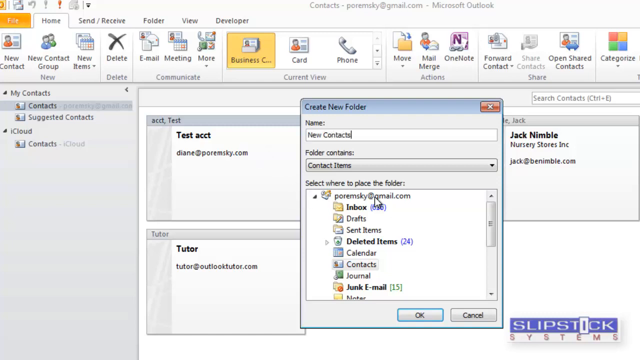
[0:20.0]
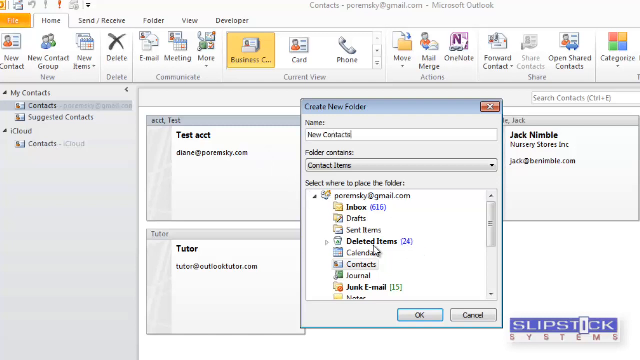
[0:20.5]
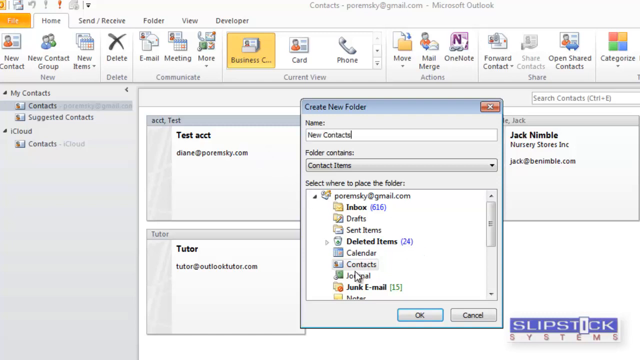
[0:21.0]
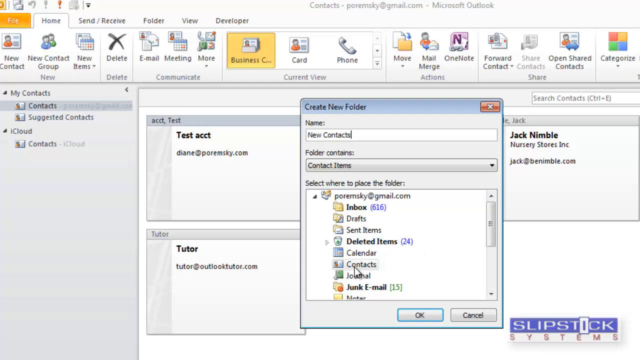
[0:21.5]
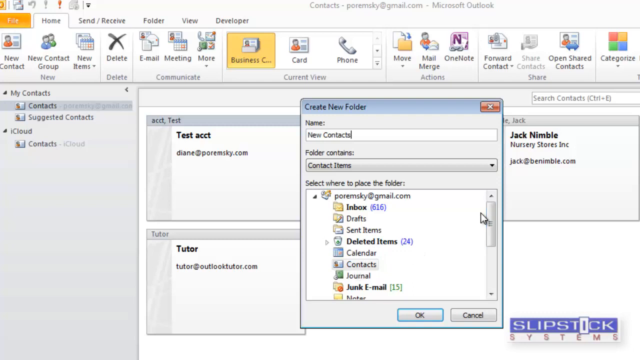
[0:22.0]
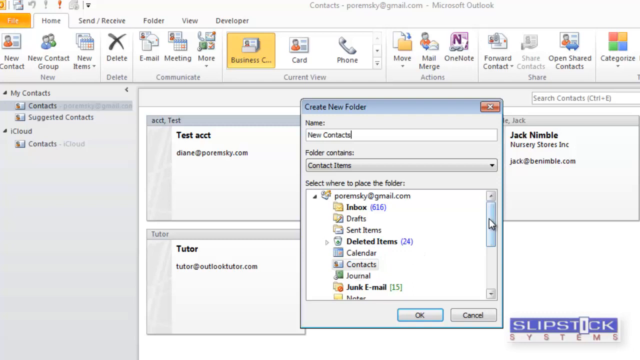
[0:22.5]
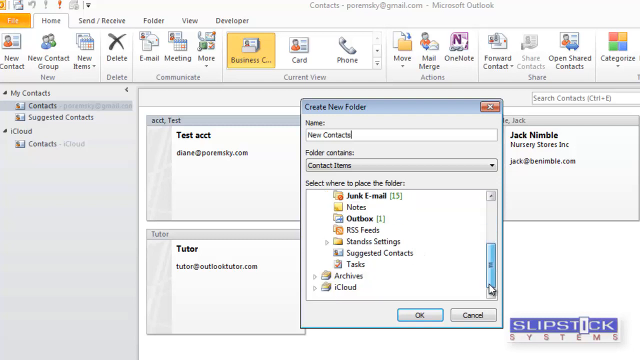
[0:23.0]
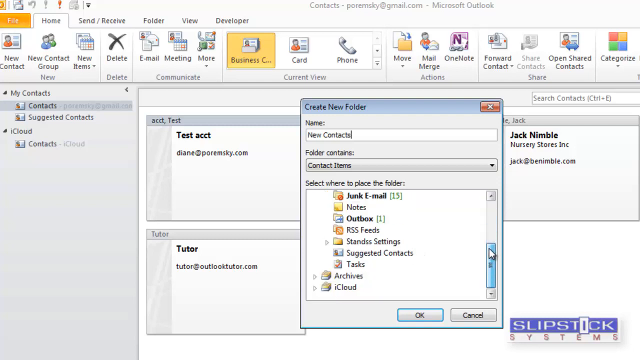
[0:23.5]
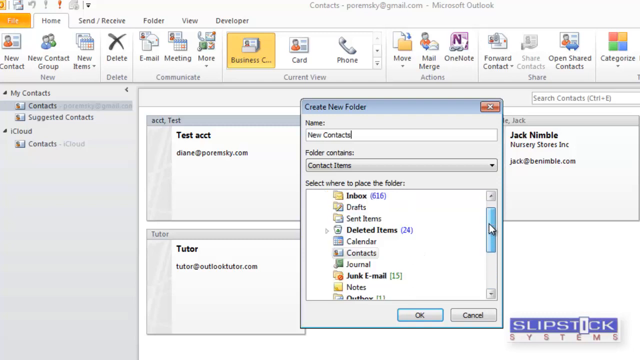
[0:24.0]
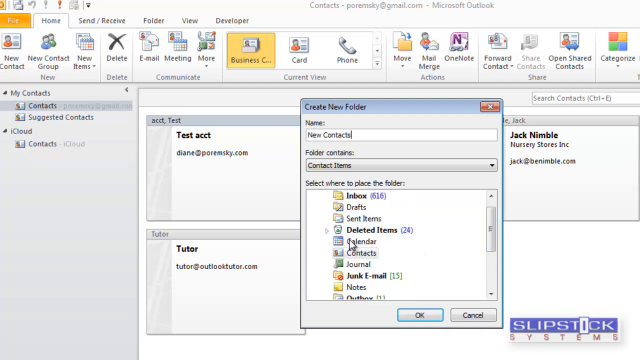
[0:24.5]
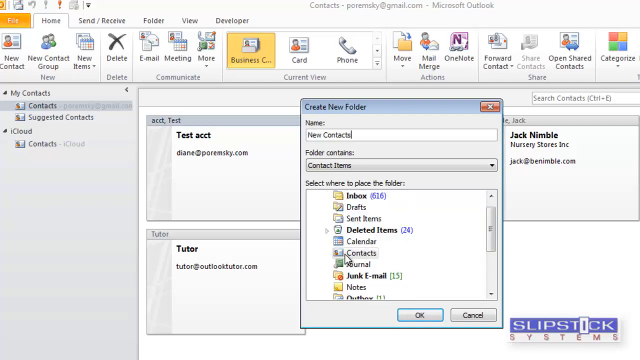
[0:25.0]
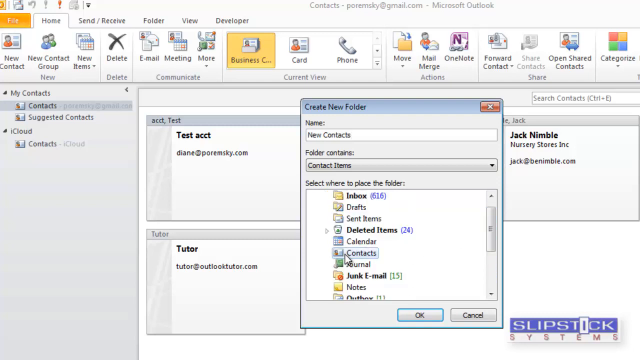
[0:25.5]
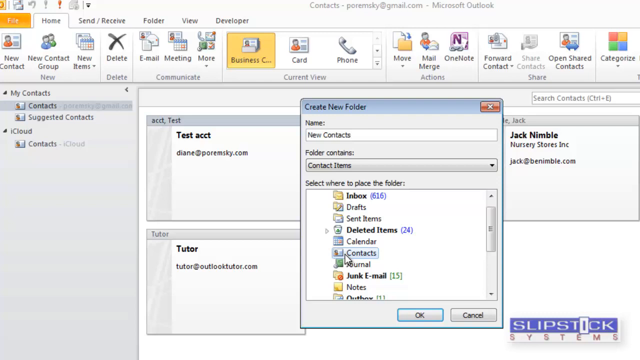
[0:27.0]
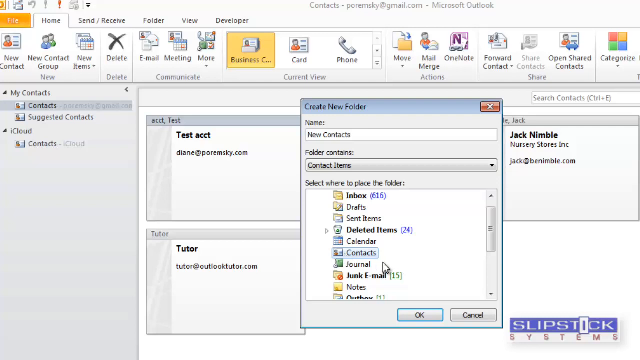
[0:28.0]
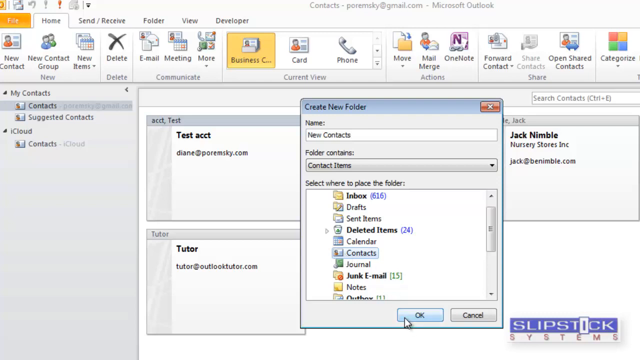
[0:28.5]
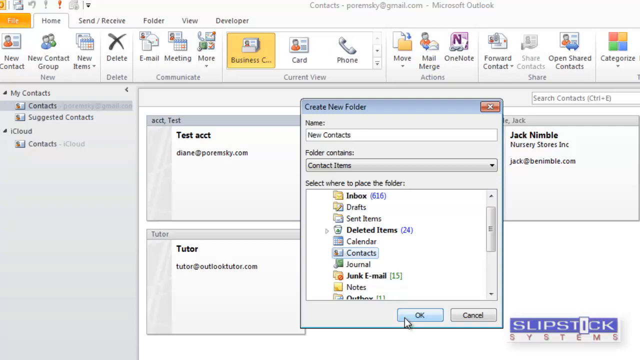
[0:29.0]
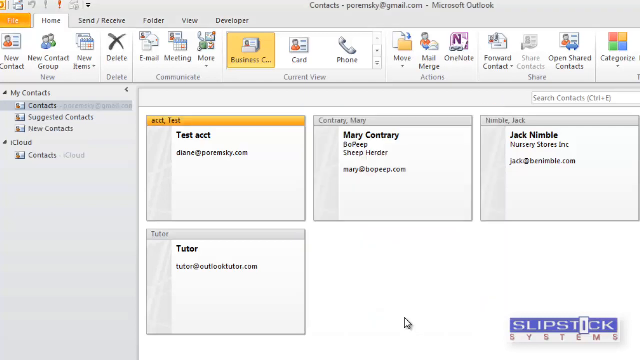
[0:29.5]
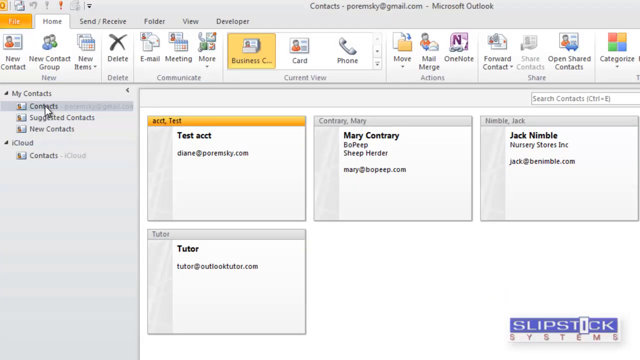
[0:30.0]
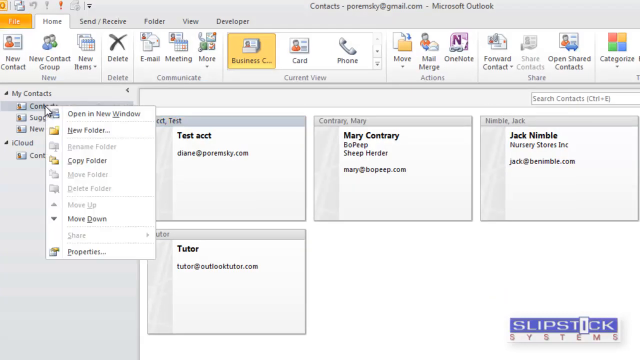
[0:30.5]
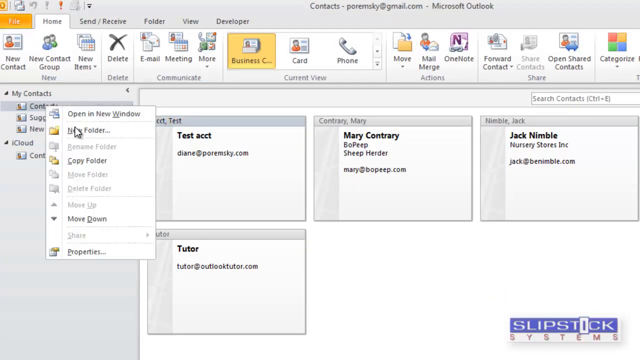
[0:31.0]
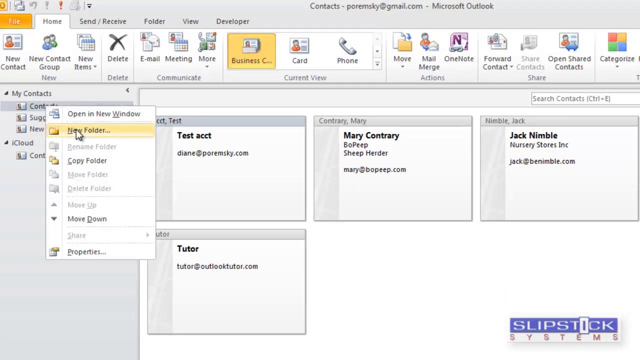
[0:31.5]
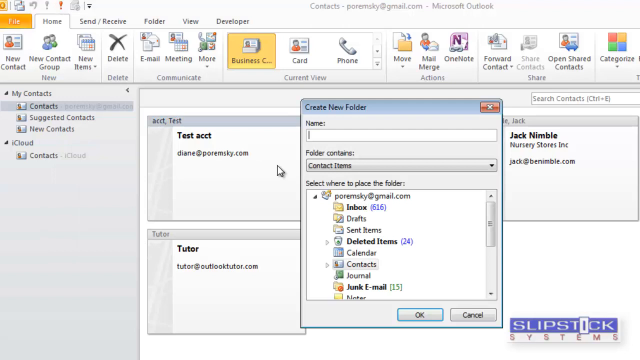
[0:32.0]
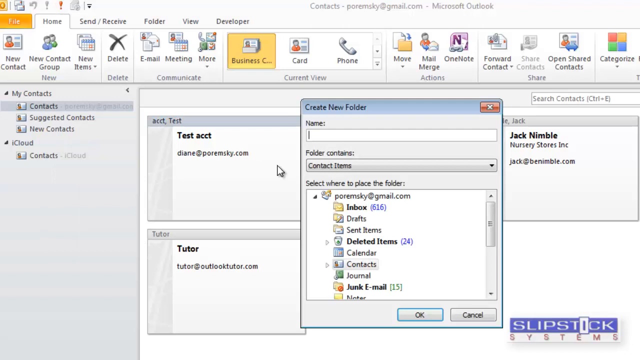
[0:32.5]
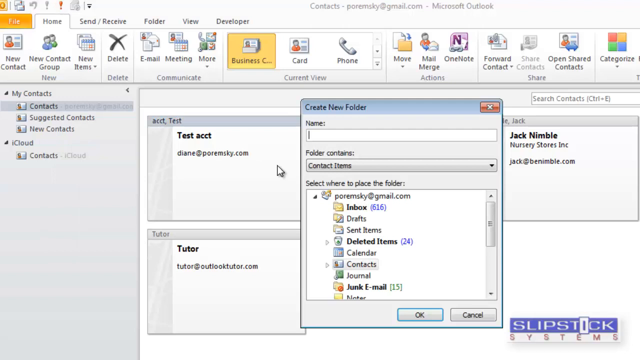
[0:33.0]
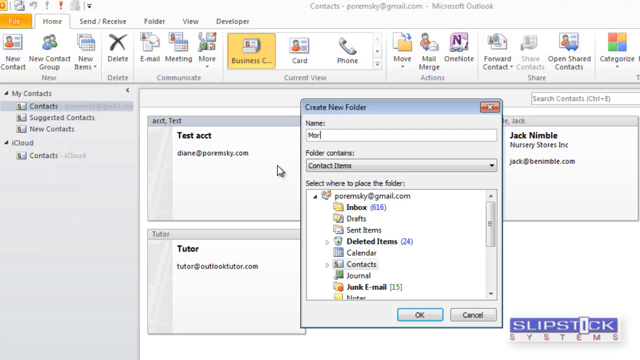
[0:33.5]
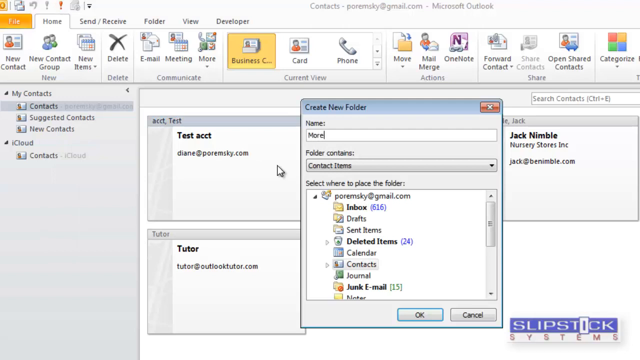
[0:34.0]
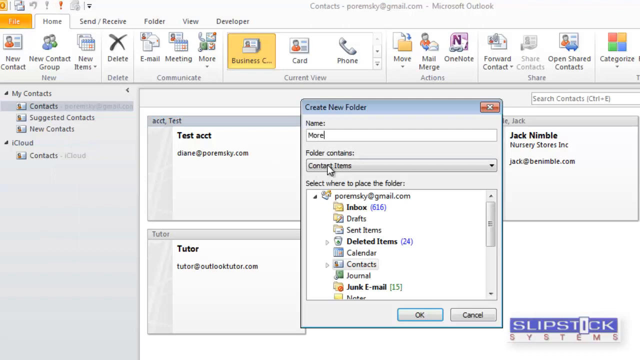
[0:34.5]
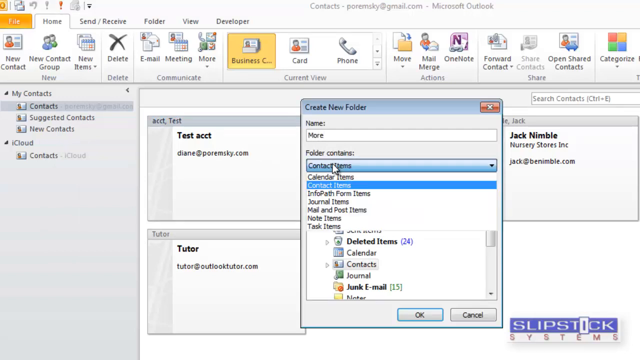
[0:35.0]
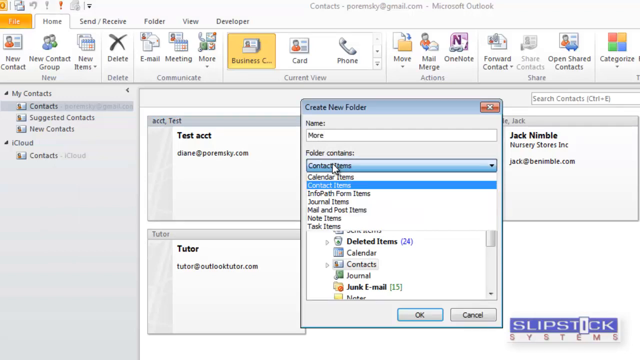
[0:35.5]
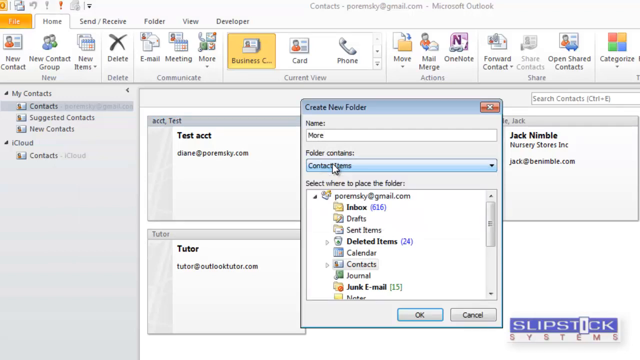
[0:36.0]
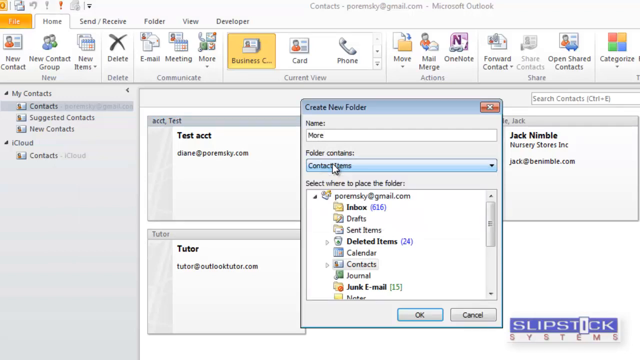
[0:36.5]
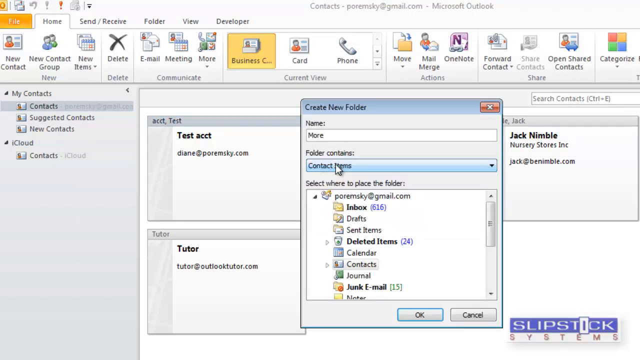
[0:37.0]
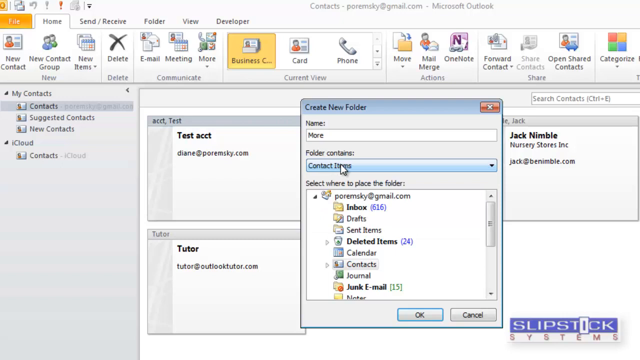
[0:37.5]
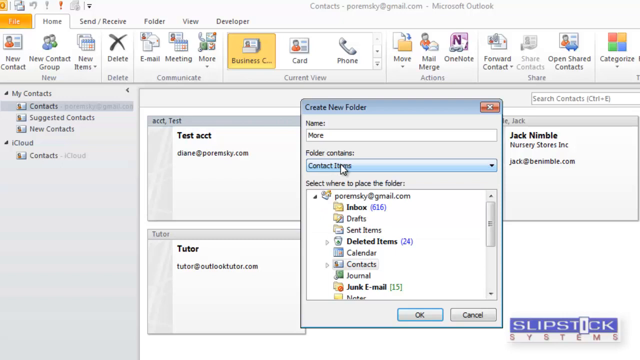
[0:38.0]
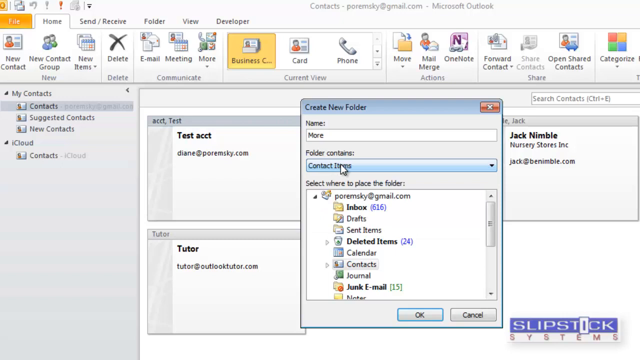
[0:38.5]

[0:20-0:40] Once the Create Folder option is opened, a pop-up box appears. In it, "new contact" is under name, and below is "folder contains," with a drop-down option showing "contact items." Under that is a section that says "Select where to place the folder," listing multiple places to put the folder: inbox, junk email, calendars, sent items and drafts. Each of these names has a little icon next to it showing what it is used for, such as a mailbox for the inbox and an icon that looks like trash for the deleted items. New folder is then chosen again, and contact items is selected.